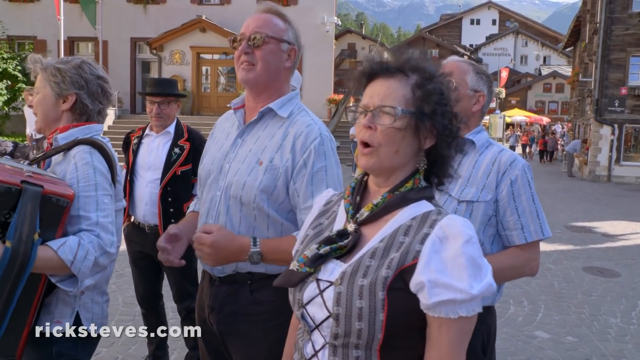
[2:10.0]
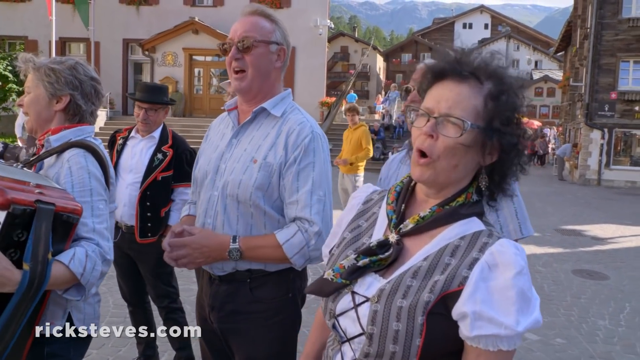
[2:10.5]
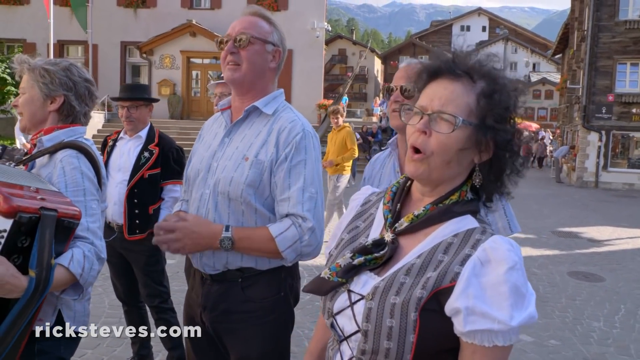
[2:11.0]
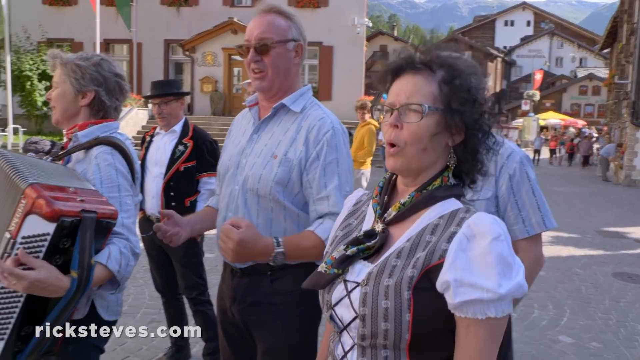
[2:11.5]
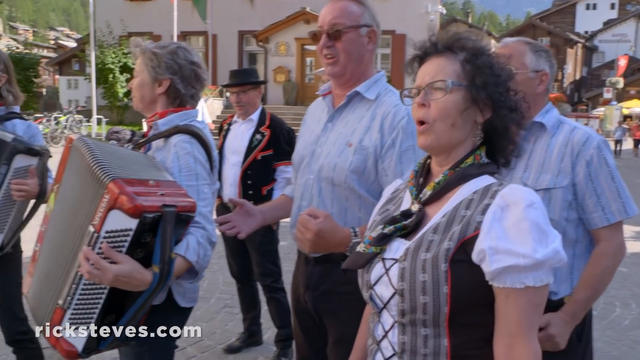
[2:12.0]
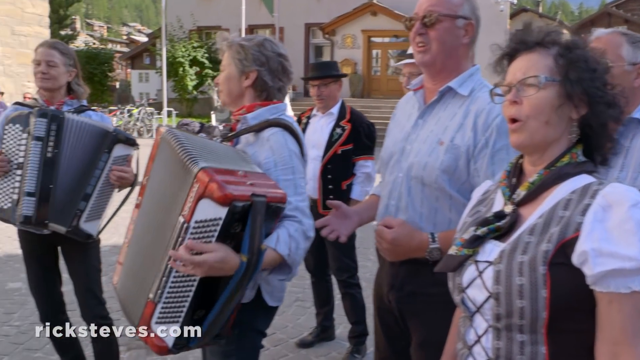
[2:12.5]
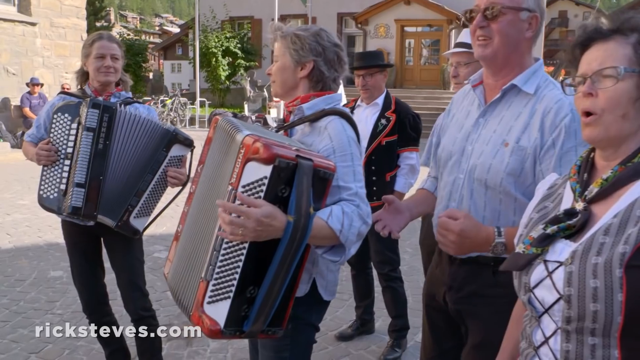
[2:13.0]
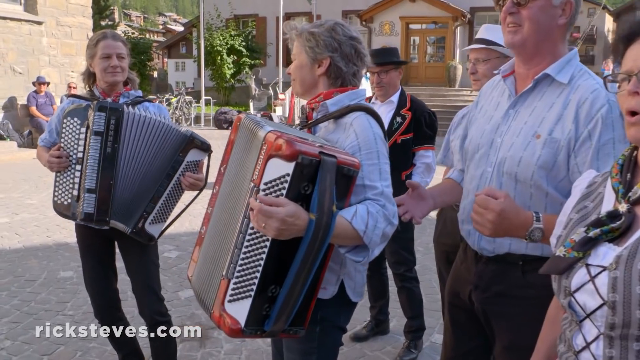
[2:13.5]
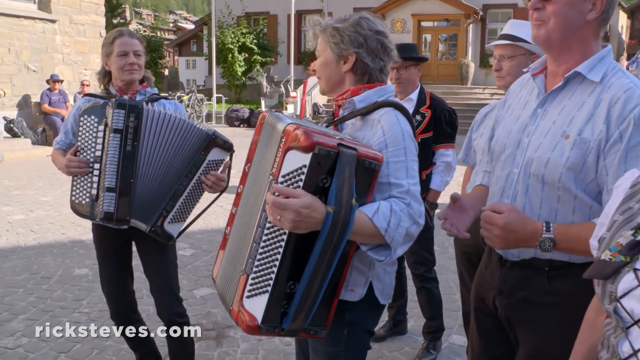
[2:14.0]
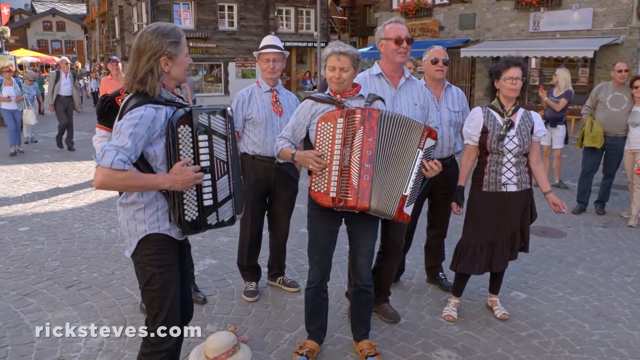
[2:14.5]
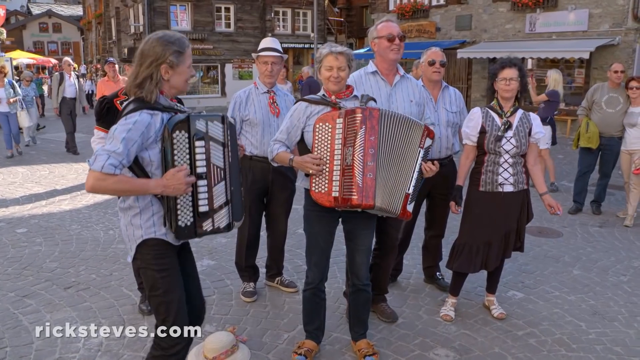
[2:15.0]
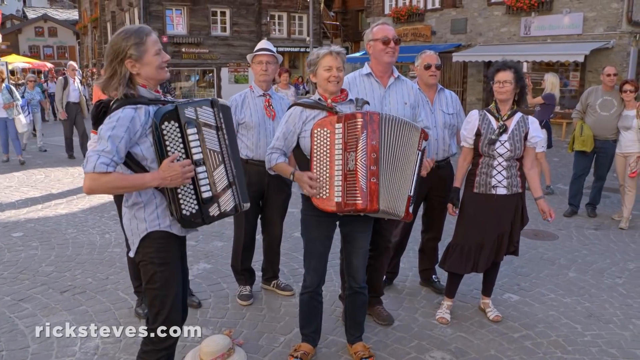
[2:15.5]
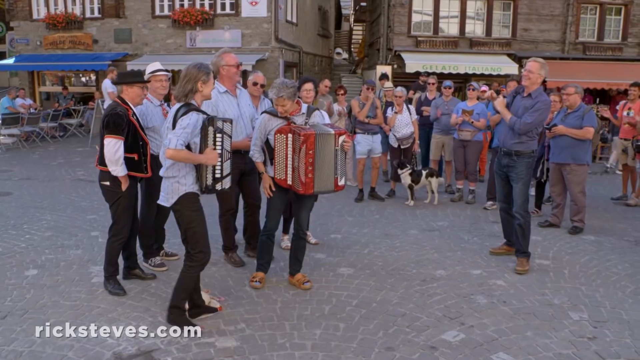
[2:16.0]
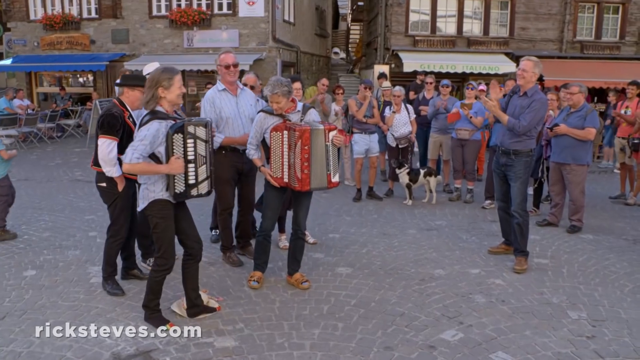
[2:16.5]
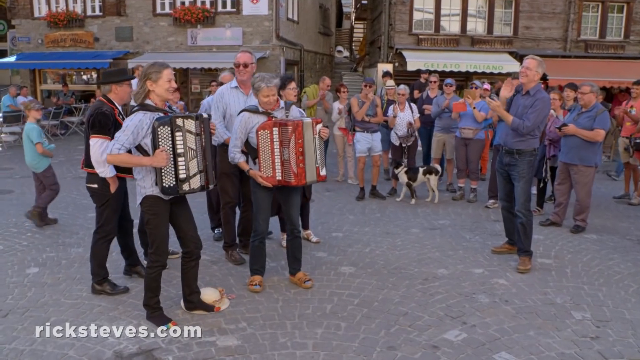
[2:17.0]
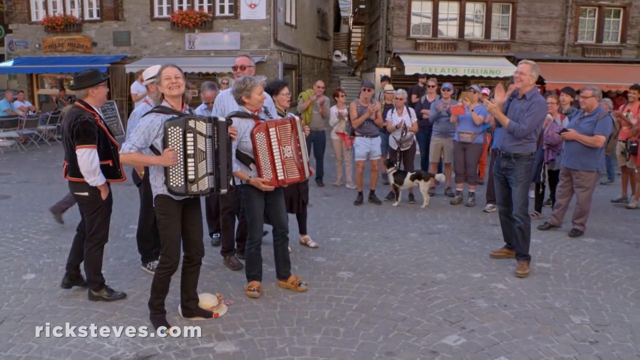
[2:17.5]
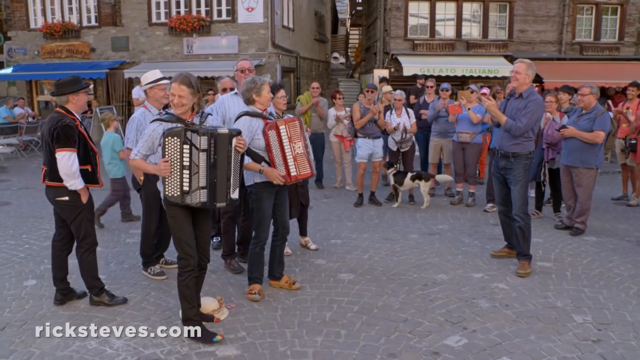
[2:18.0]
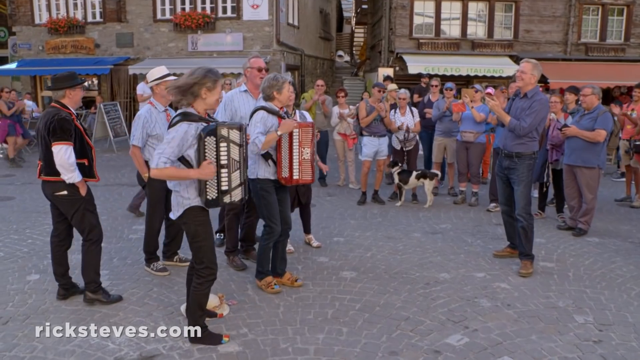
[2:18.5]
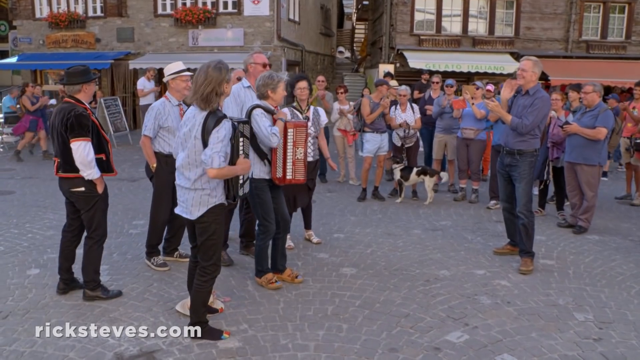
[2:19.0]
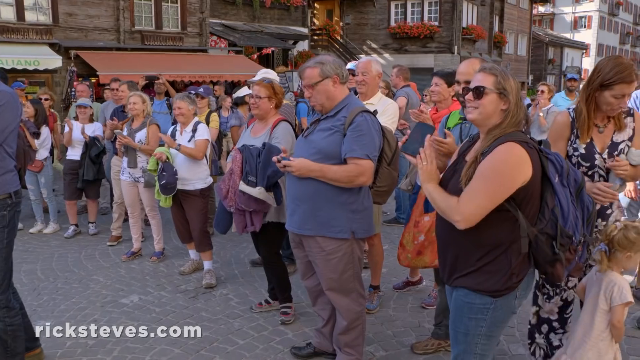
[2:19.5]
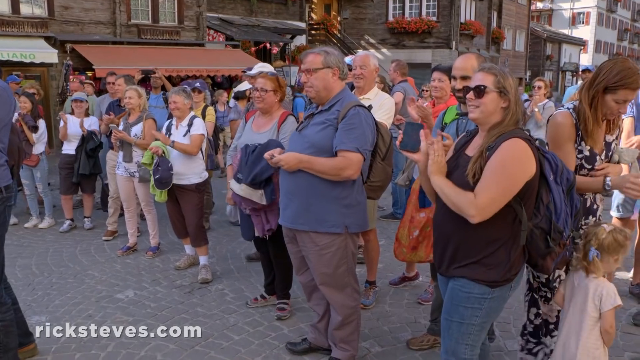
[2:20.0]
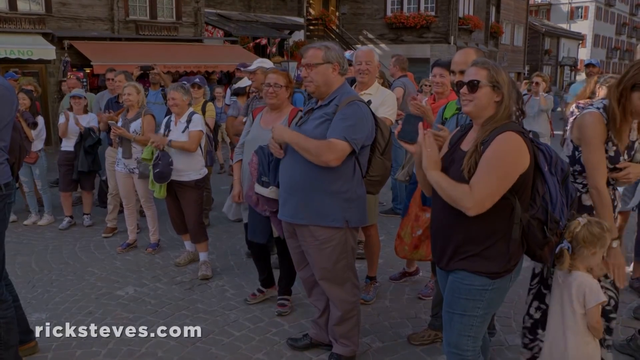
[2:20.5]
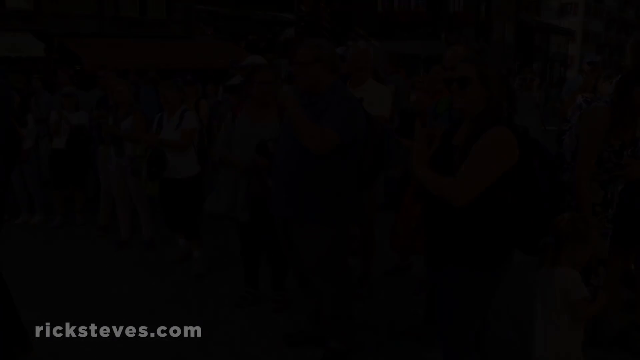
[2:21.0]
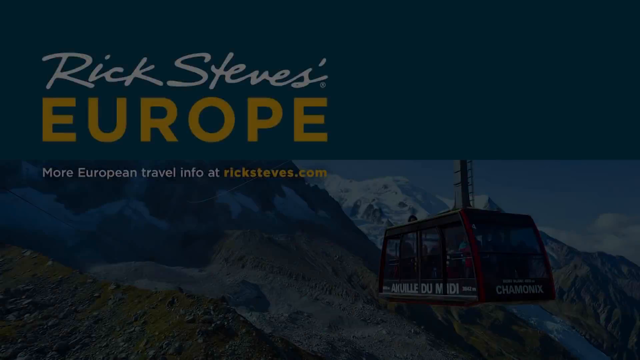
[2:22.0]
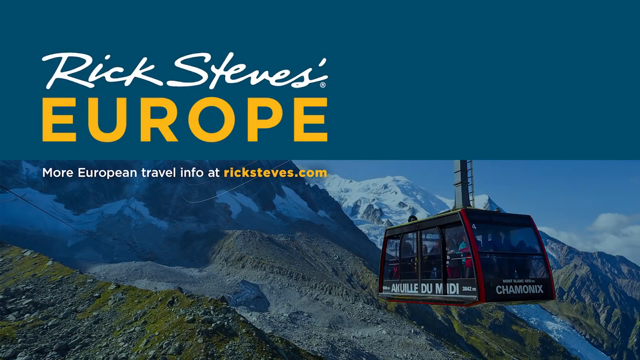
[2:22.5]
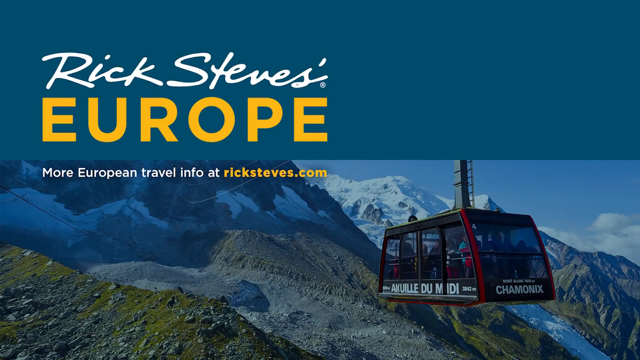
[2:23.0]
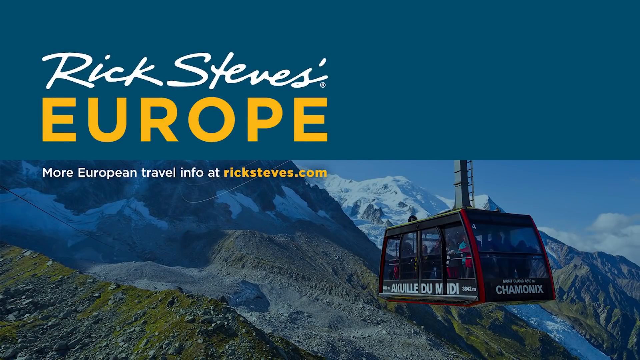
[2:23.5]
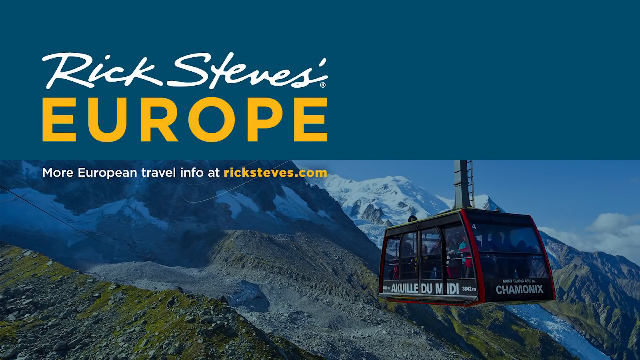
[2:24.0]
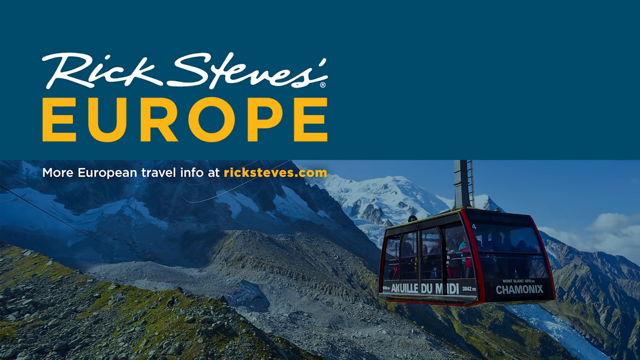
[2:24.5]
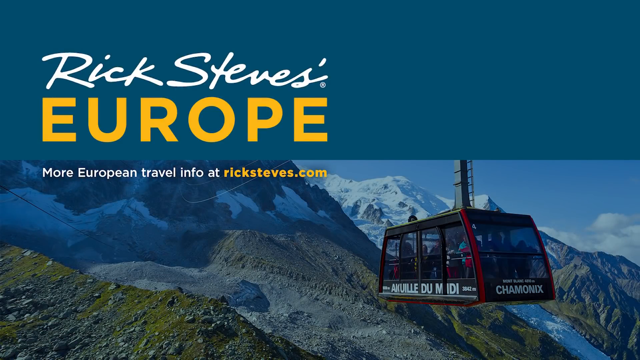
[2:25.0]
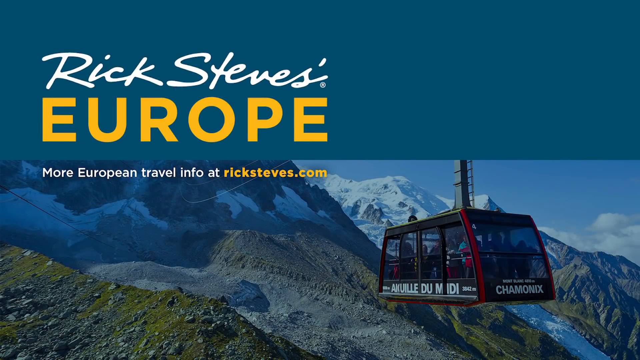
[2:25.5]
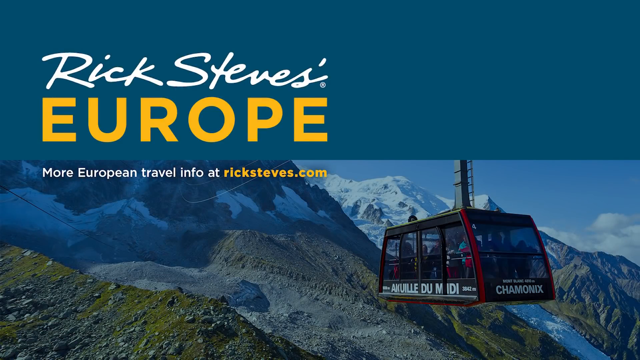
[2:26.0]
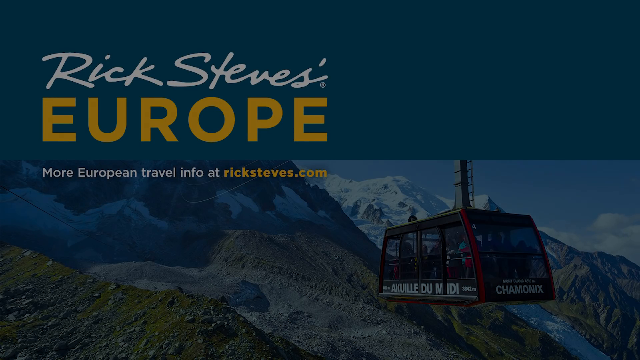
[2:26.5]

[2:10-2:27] The video is about Zermatt, Switzerland, finding charm in the Swiss Alps. A singing group of three women and four men performs in the middle of the street for tourists. The women in front each play an accordion, one red and one black. They sing, and some sway and dance. They look to have finished a song and thank the crowd for clapping. A large crowd of maybe 40 or 50 people has stopped to watch, including young kids, teenagers, older people and a person with a dog. Spectators videotape and take pictures of the musicians and clap.